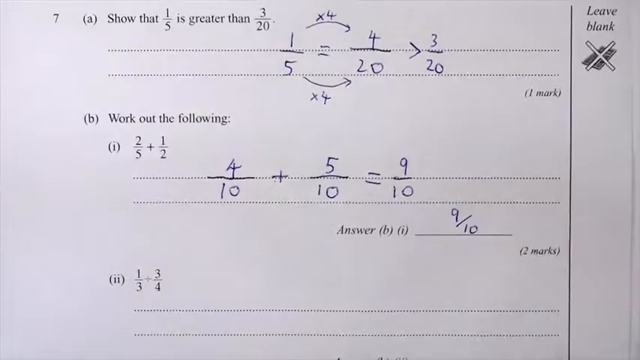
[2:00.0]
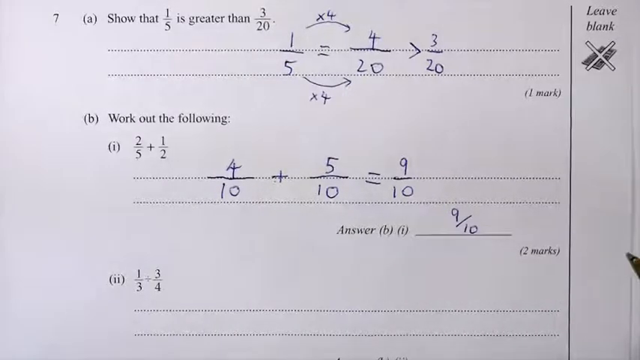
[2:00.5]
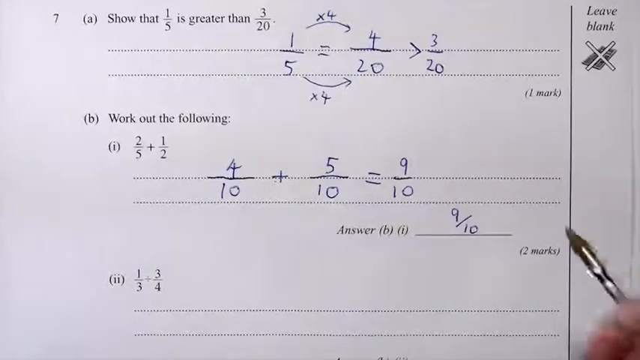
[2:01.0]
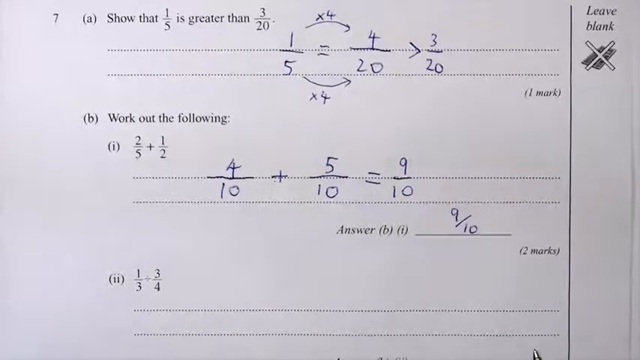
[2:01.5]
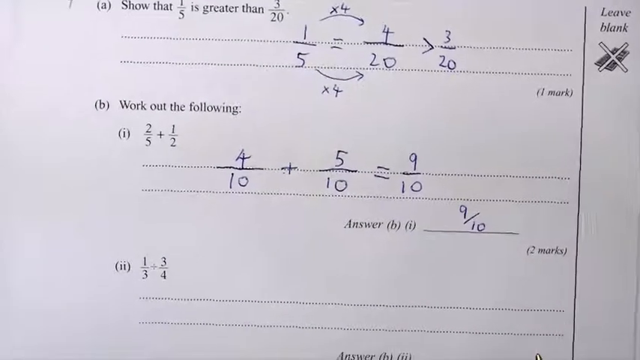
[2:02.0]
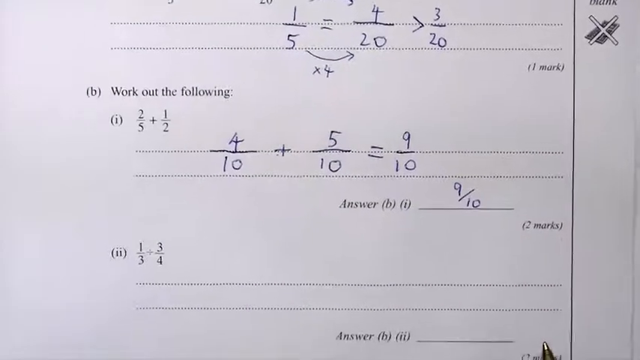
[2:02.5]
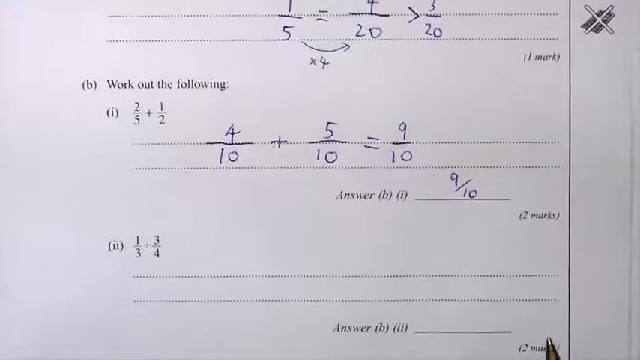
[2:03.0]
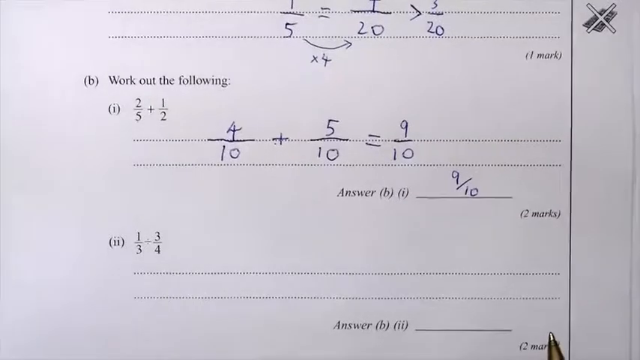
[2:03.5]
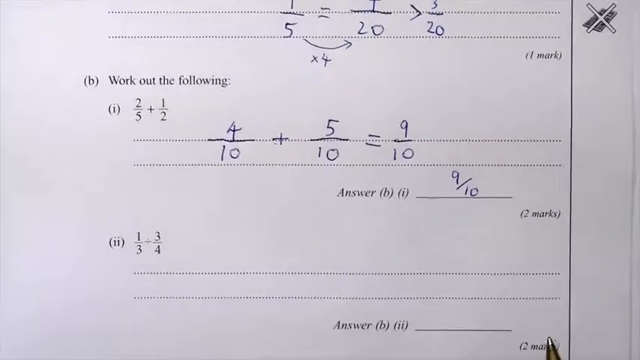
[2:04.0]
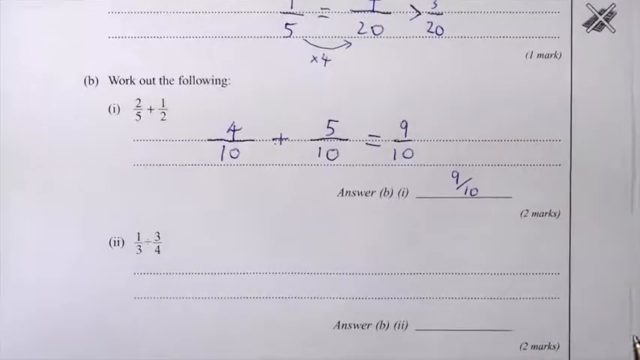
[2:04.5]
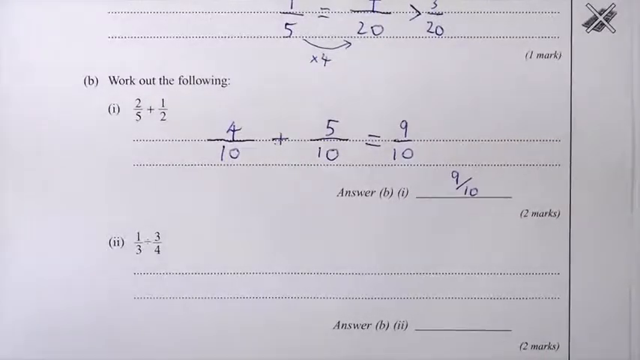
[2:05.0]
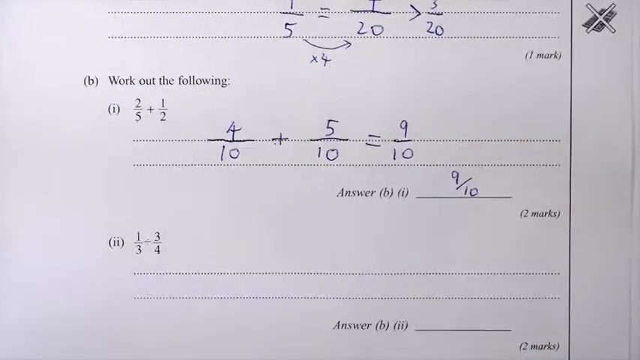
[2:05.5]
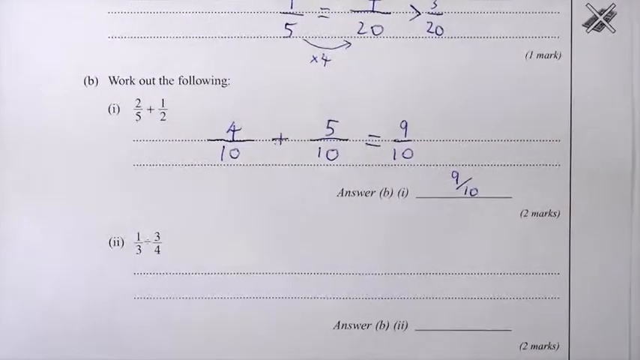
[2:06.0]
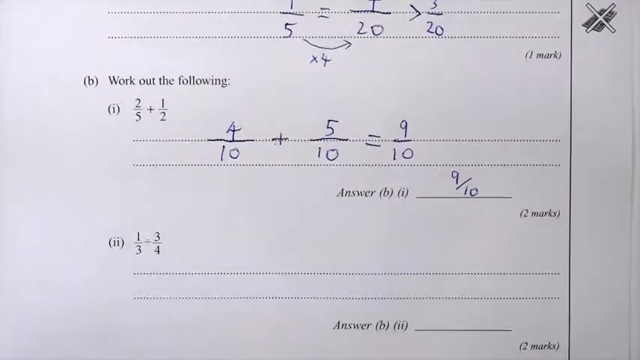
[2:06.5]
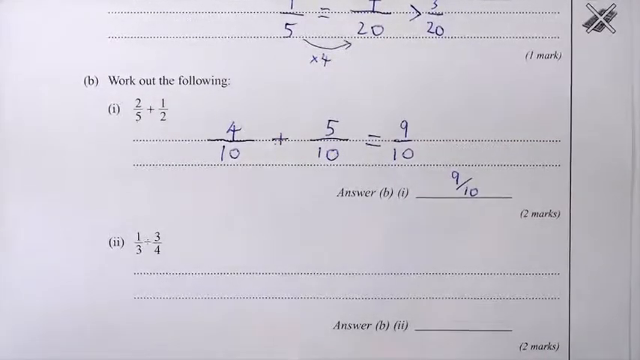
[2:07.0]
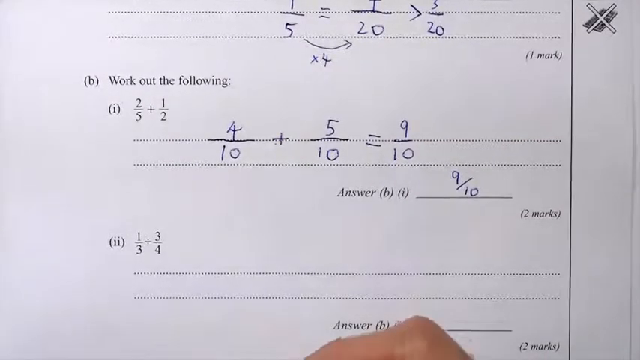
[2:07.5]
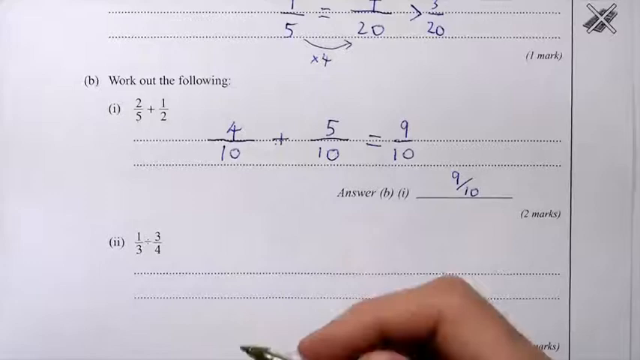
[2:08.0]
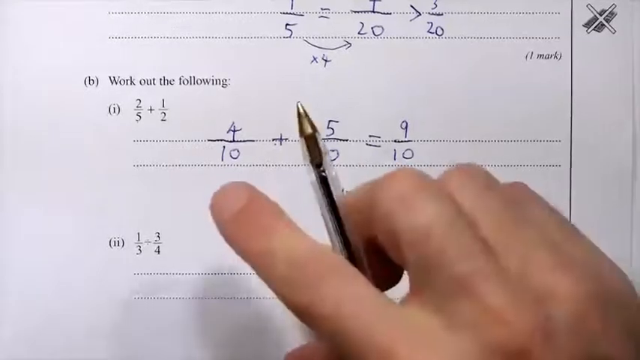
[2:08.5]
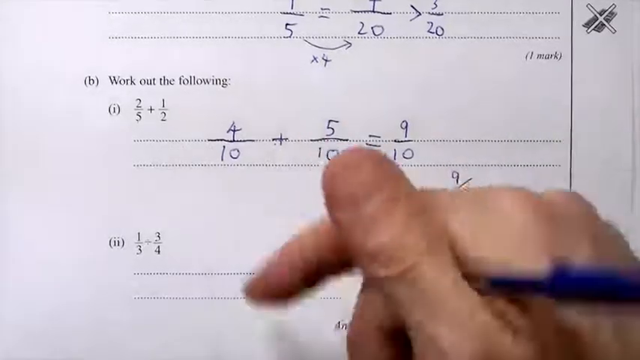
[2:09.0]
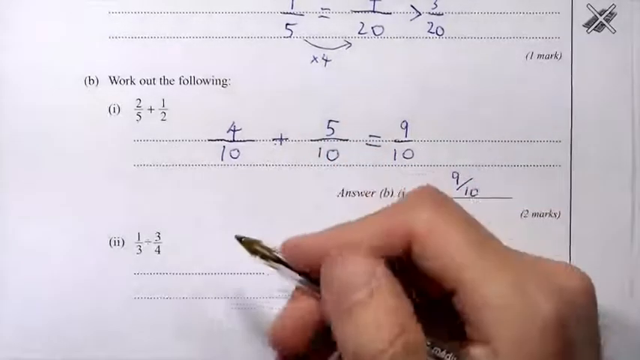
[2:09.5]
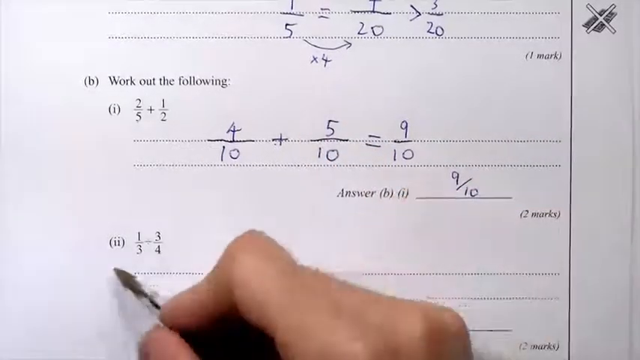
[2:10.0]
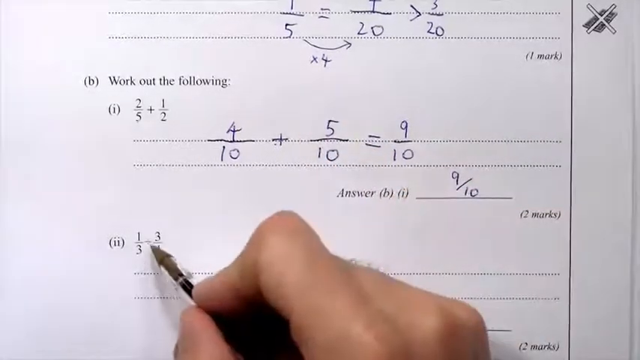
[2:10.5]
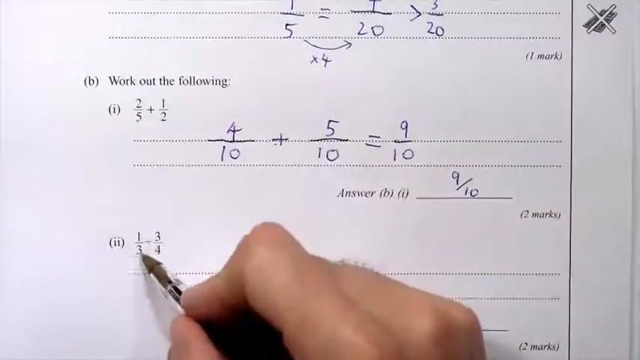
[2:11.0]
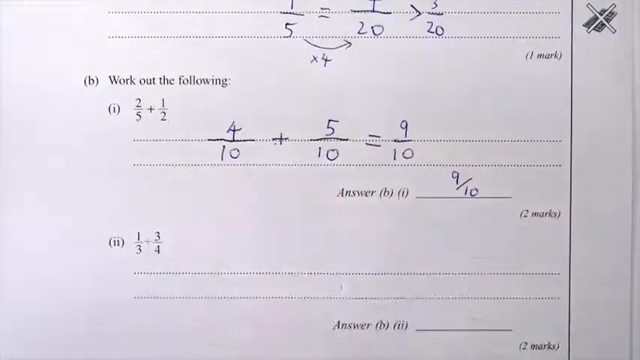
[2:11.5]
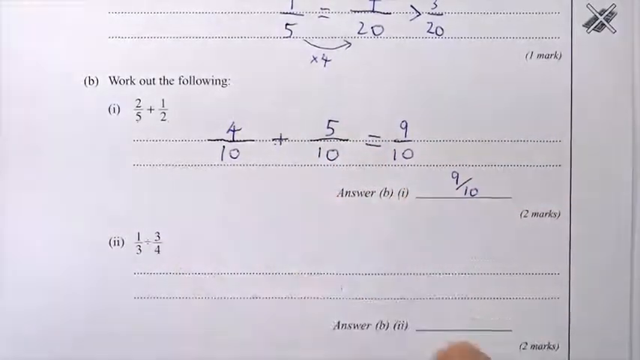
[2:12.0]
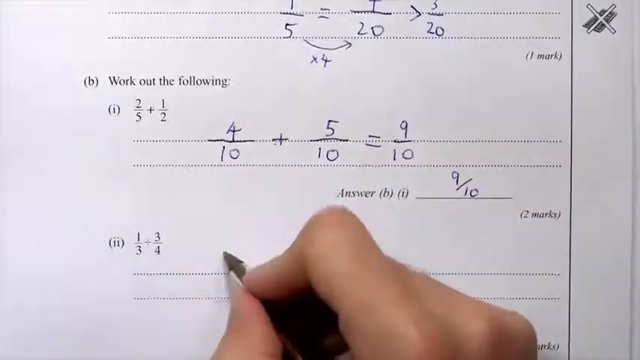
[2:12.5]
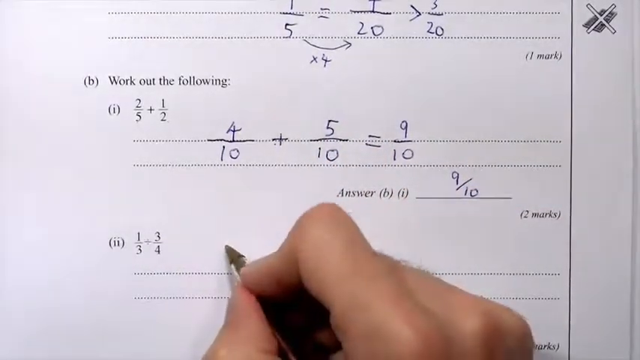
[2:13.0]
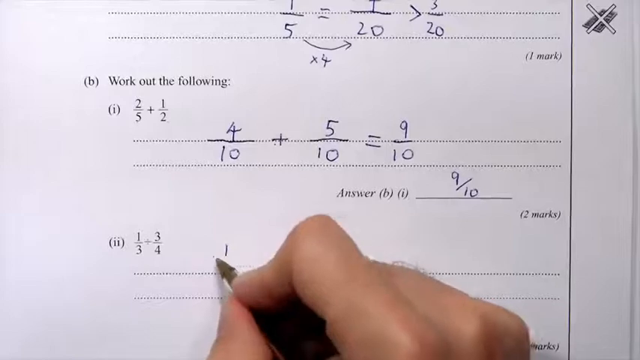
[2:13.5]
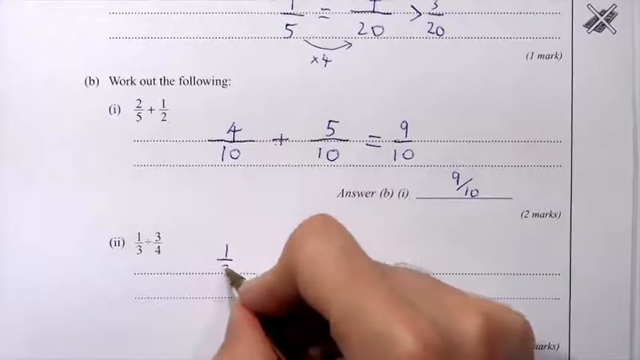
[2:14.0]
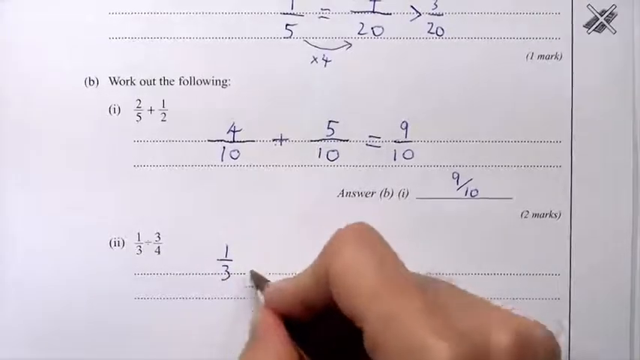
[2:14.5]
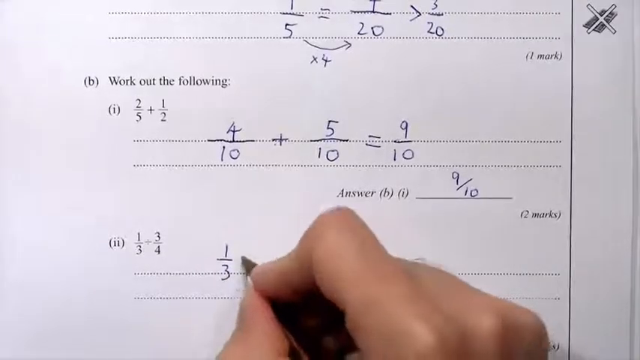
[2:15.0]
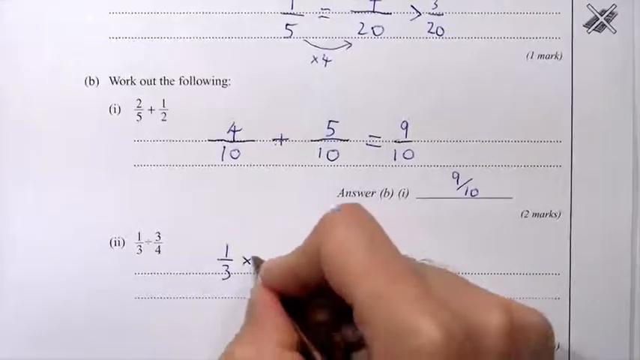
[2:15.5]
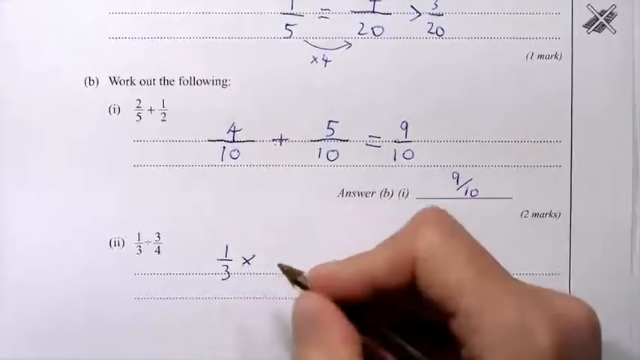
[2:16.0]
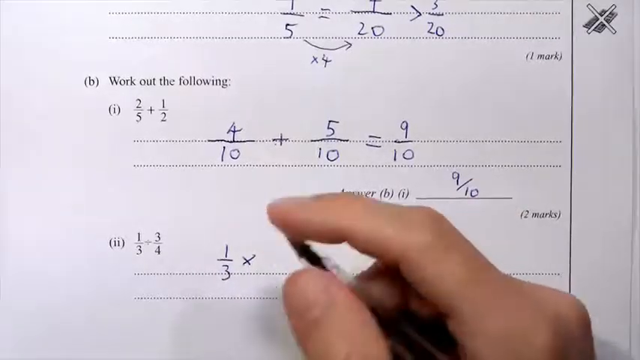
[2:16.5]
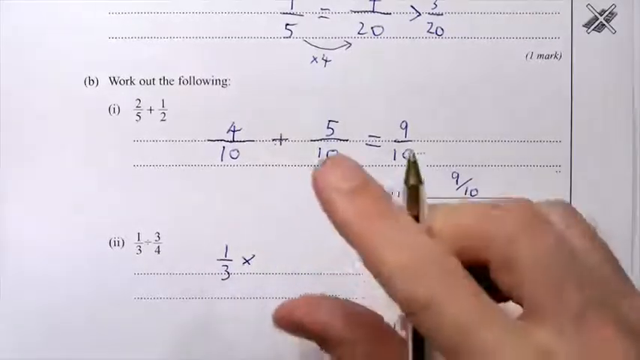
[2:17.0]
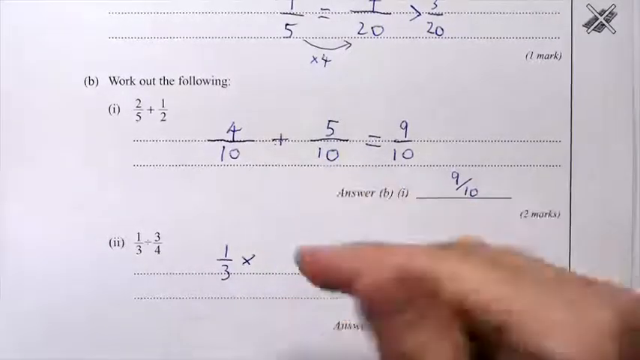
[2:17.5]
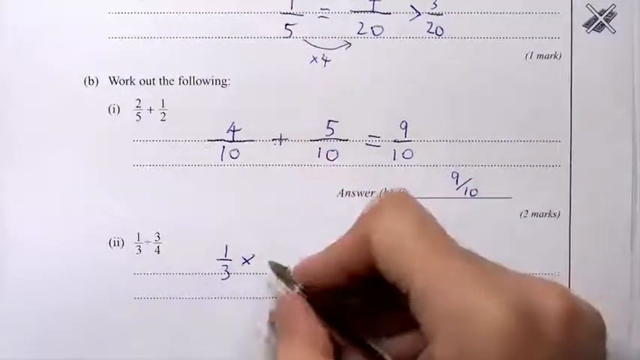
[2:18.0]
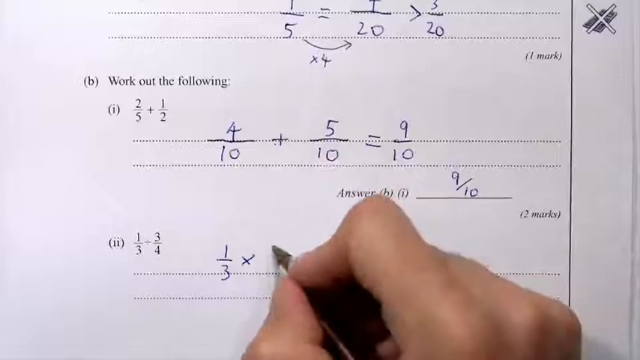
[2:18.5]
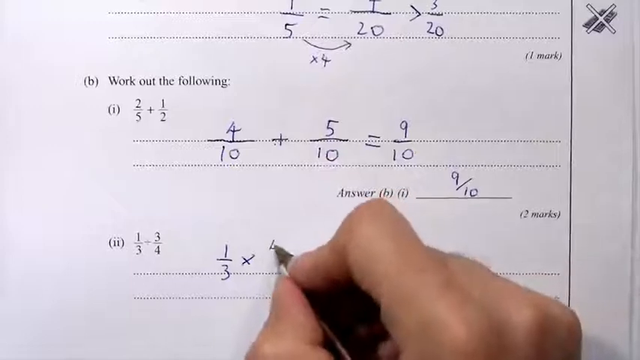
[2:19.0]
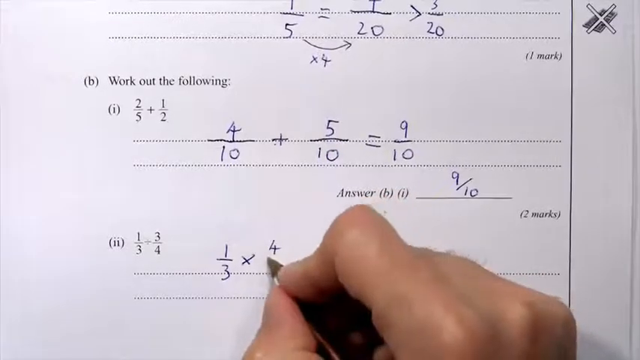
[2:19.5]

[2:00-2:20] The work moves on to 7b Roman numeral 2, which divides two fractions: 1/3 divided by 3/4. The second fraction is flipped from 3/4 to 4/3, and the problem is rewritten as 1/3 times 4/3.